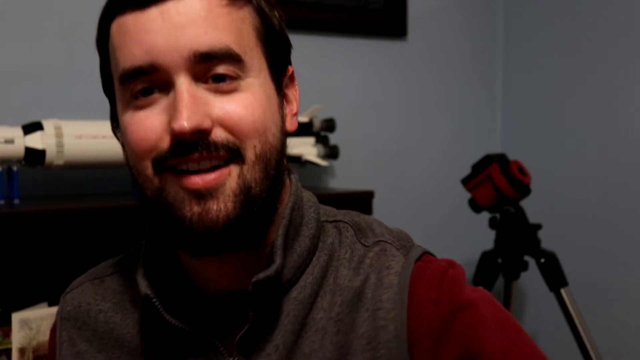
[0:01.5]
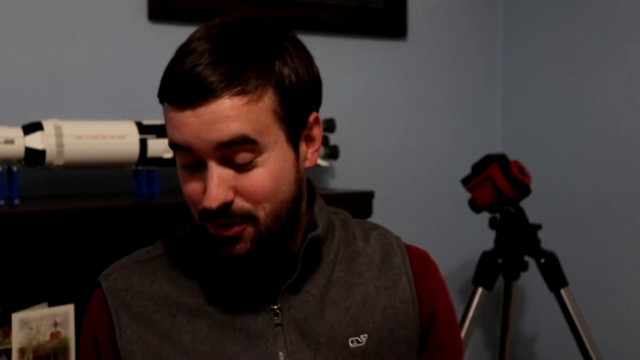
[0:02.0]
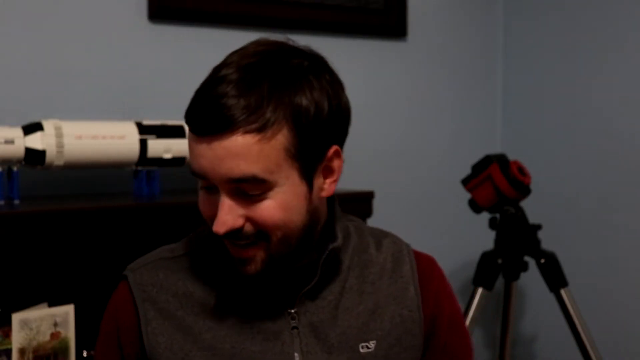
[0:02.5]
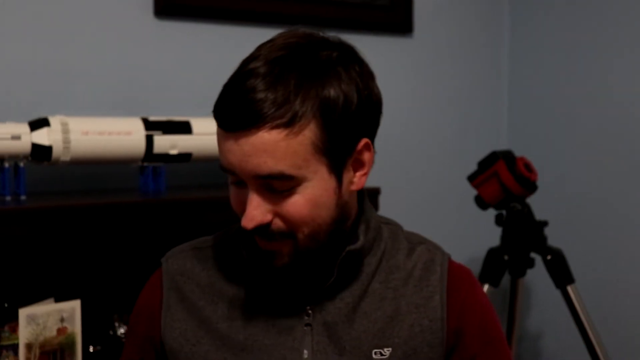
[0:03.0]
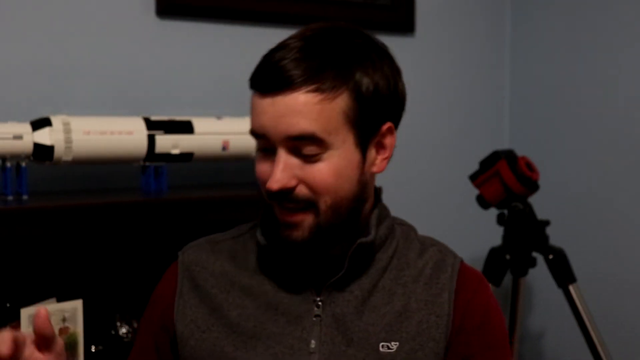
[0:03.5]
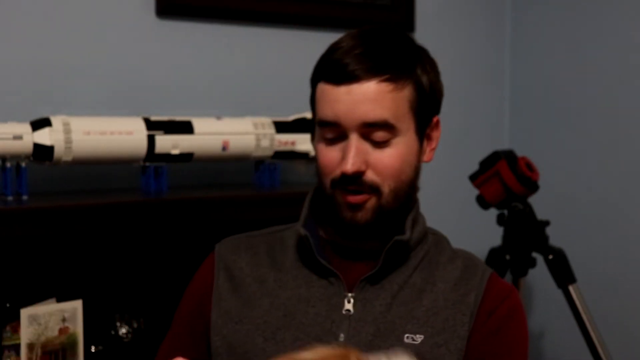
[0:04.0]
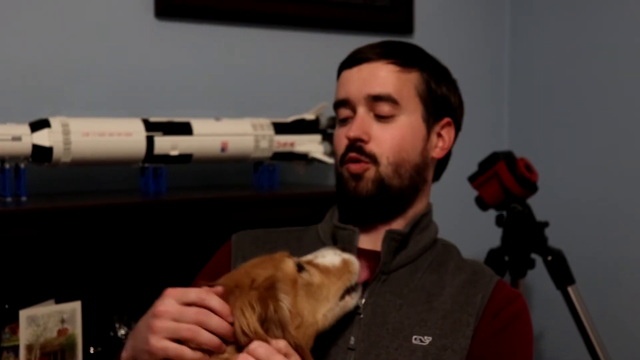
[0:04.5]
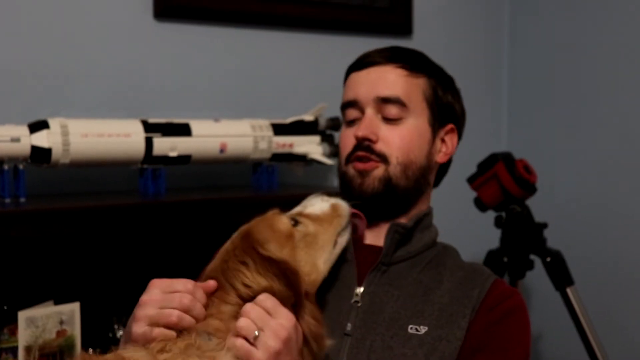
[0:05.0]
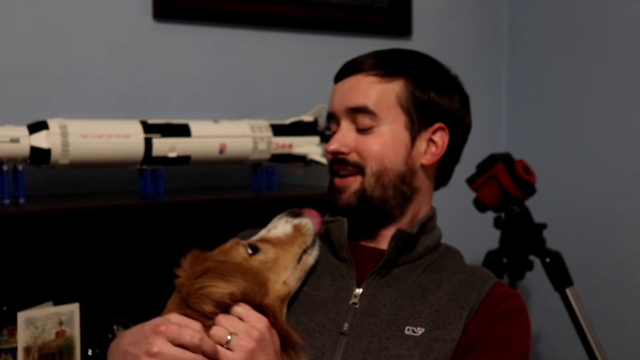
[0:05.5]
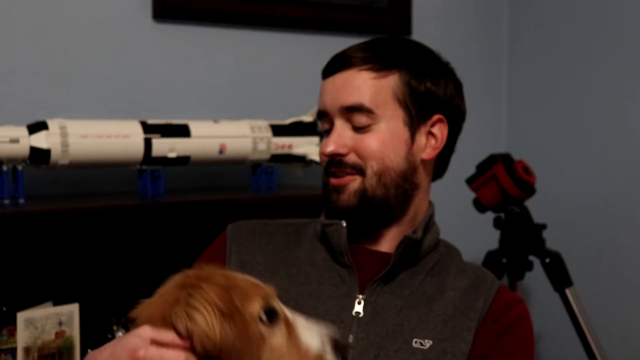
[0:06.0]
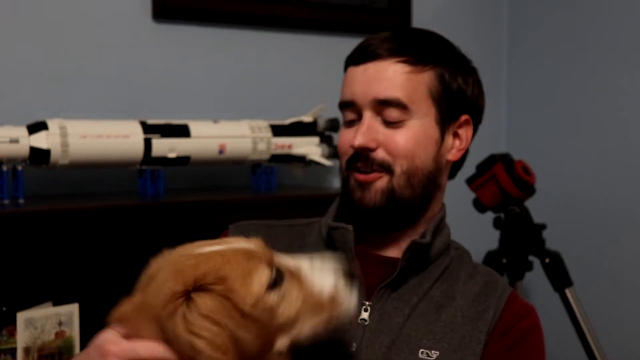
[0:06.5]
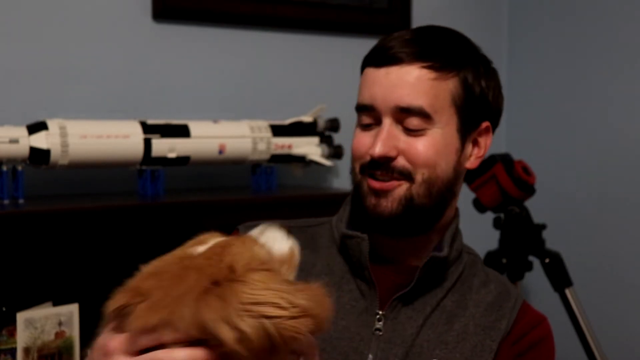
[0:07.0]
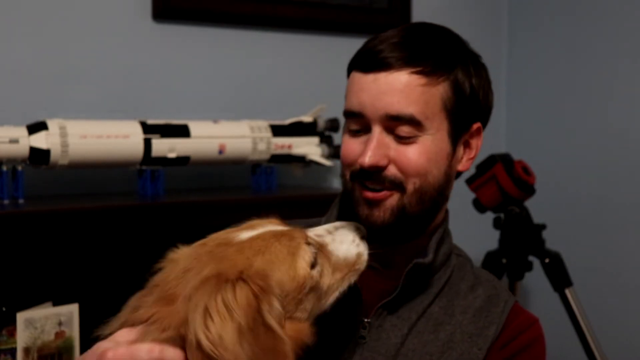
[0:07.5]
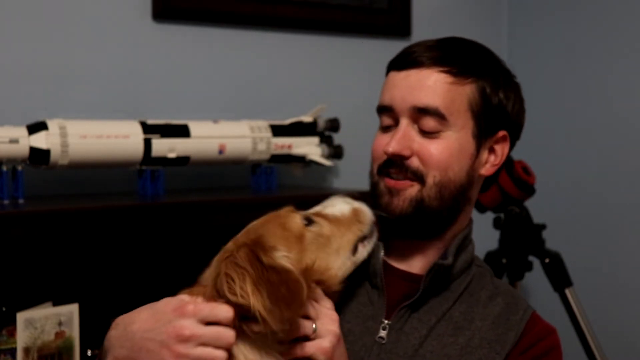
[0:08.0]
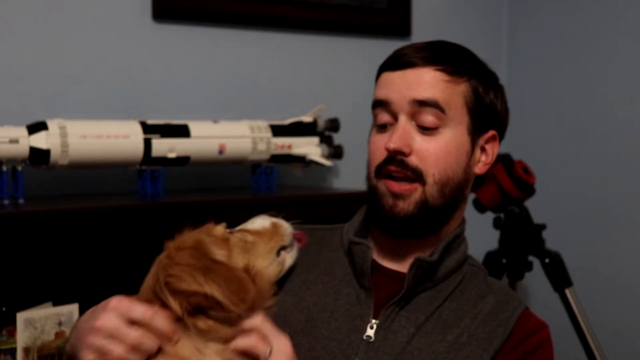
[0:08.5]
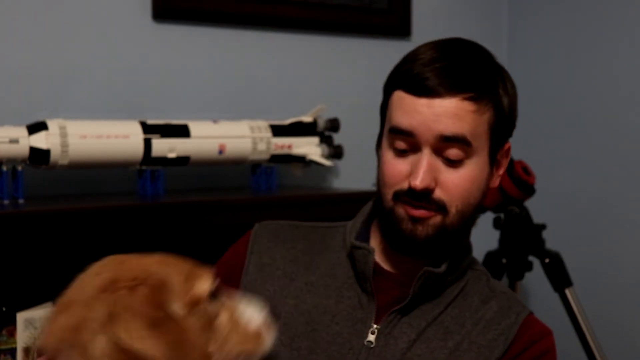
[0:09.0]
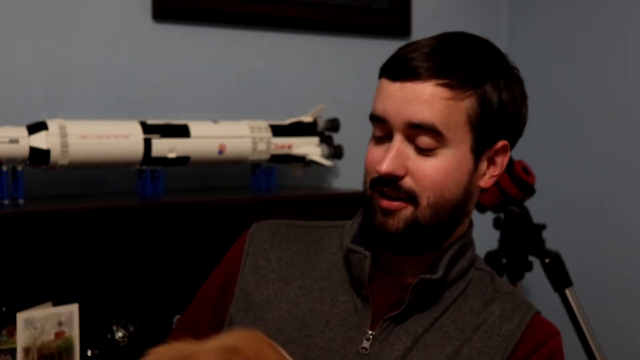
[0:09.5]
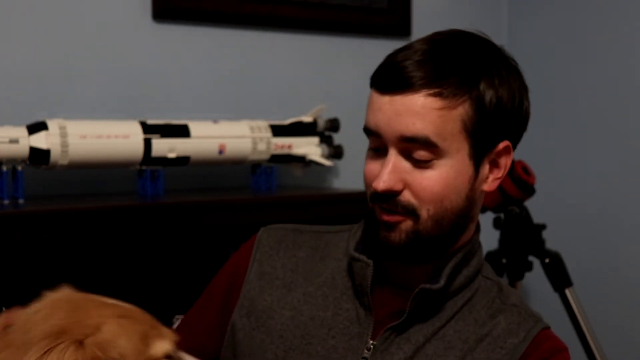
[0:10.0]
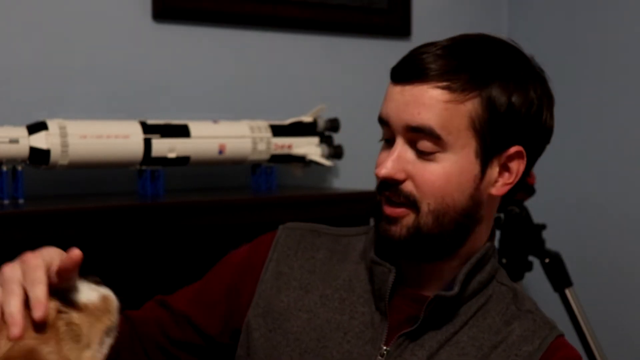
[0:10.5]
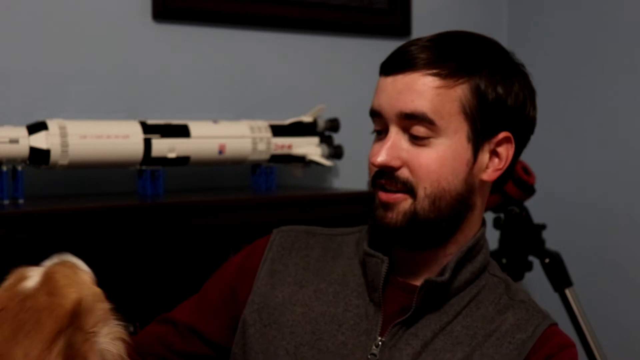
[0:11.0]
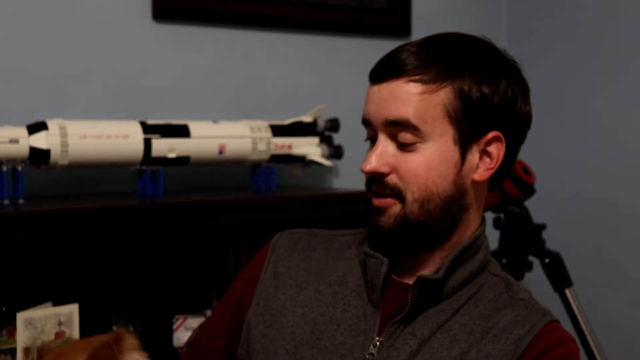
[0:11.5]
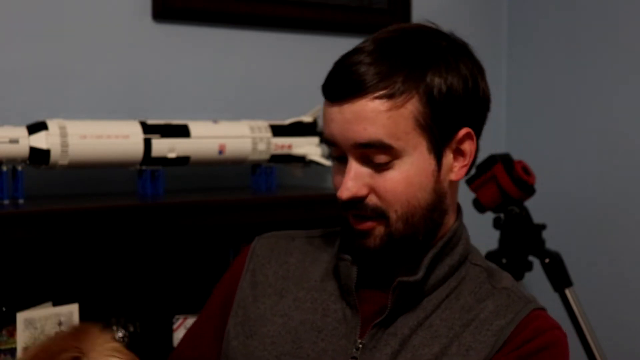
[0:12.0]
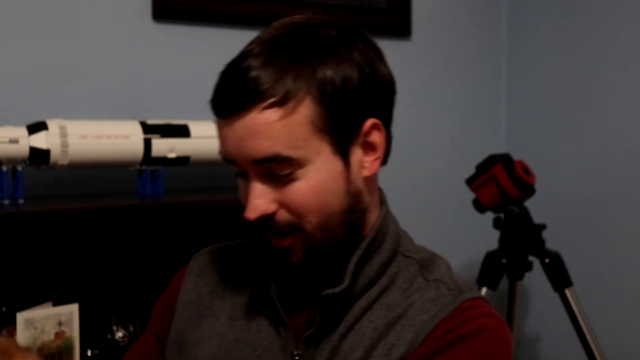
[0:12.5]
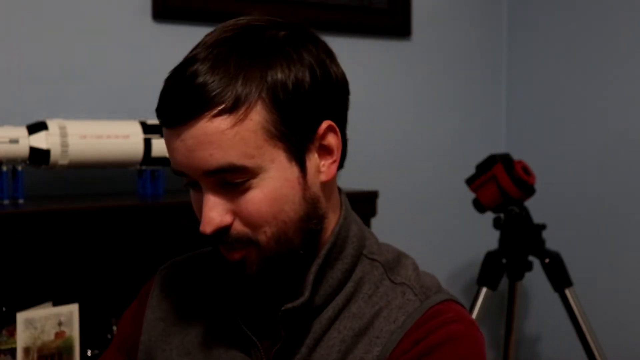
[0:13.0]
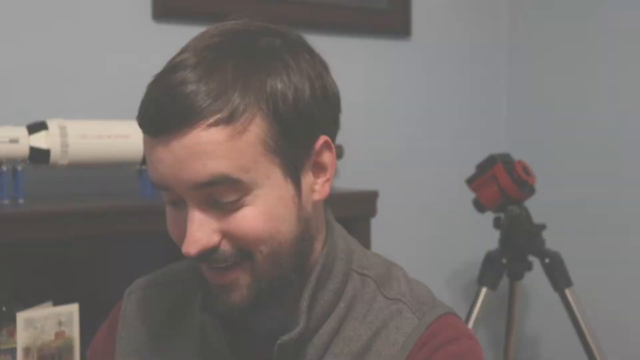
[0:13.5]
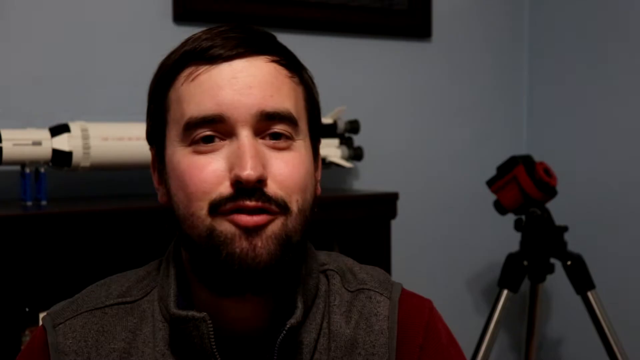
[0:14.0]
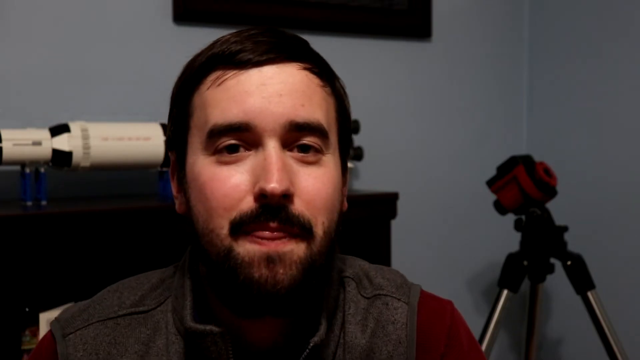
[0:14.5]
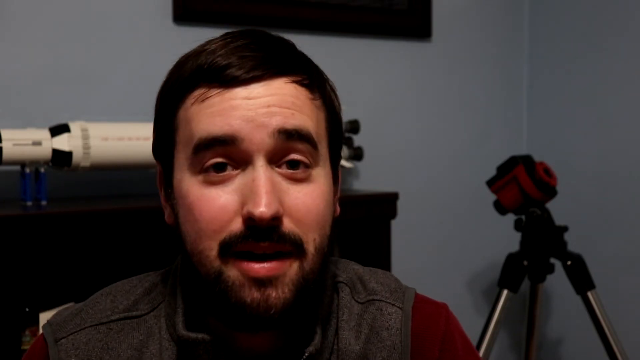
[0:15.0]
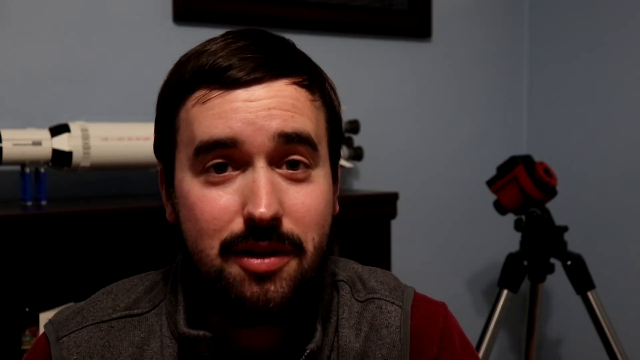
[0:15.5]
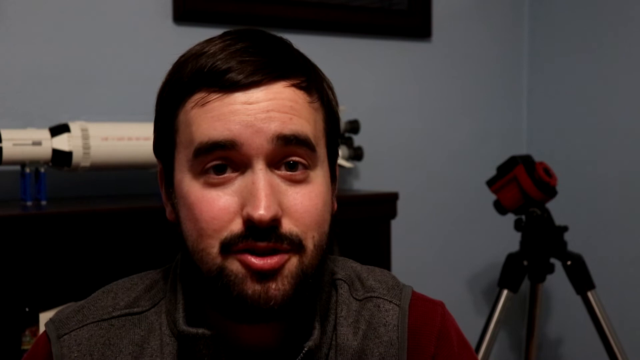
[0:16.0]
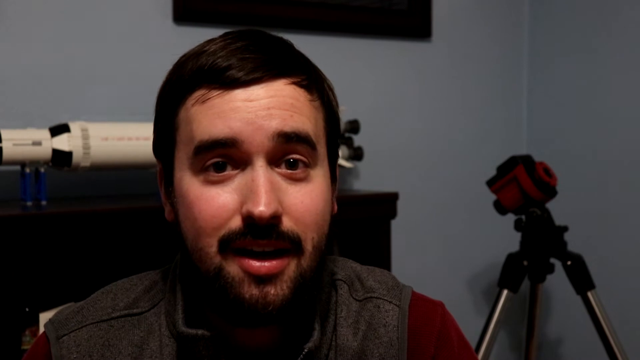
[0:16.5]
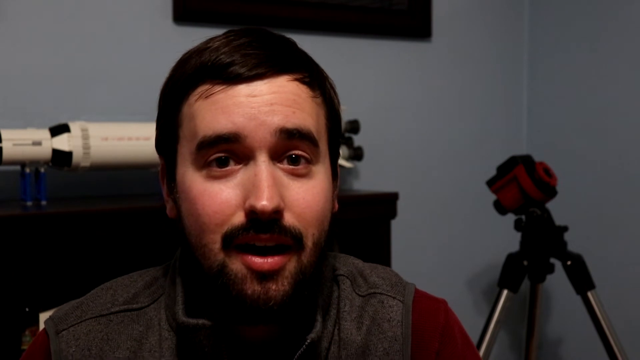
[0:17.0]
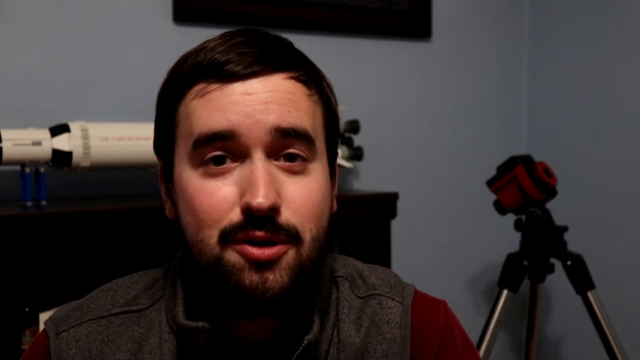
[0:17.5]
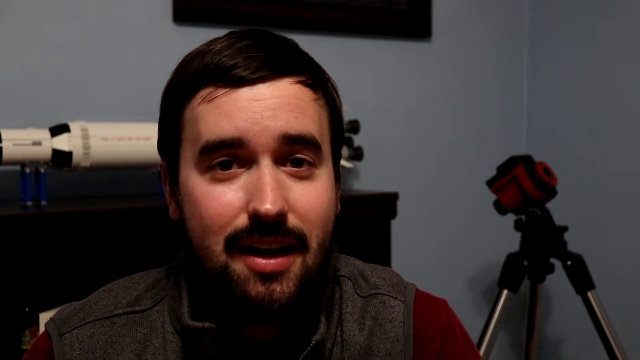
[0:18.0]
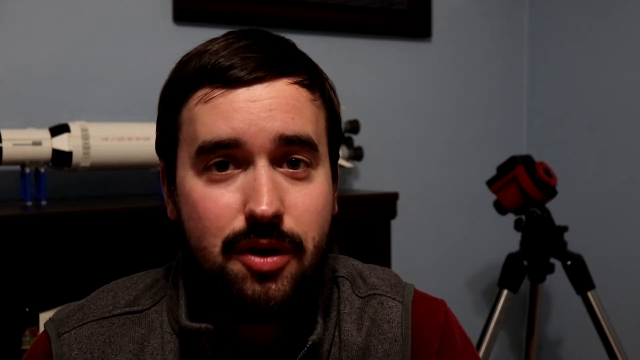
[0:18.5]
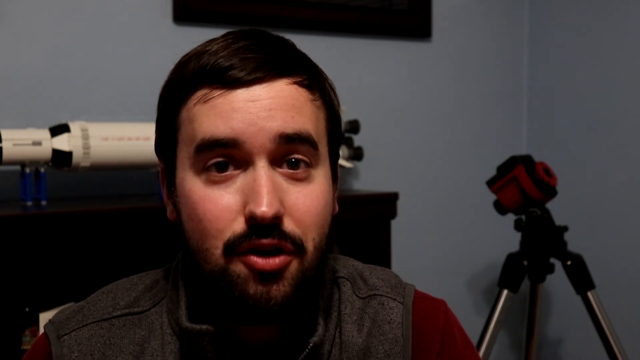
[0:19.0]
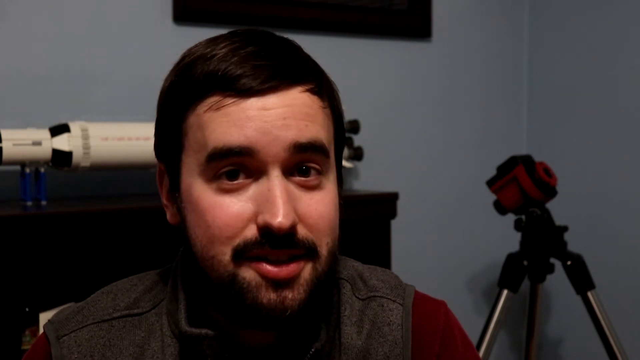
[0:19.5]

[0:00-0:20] The video begins with a black screen for maybe a second, then it flips on as if someone has switched on a camera. A man's face appears, and it looks like he is just taking his hand off the camera, as if he has just turned it on. He wears a red shirt with a vest over it and has dark brown hair and a beard. He is sitting in a room; in the corner behind him is a tripod, though it doesn't look like anything is mounted on it, and on a shelf behind him is what looks like a giant model rocket laying horizontally on the surface of the shelf. The man is playing with his dog, a brown dog that looks like a golden retriever or maybe a Cocker Spaniel, which comes up and starts to lick his chin and face.